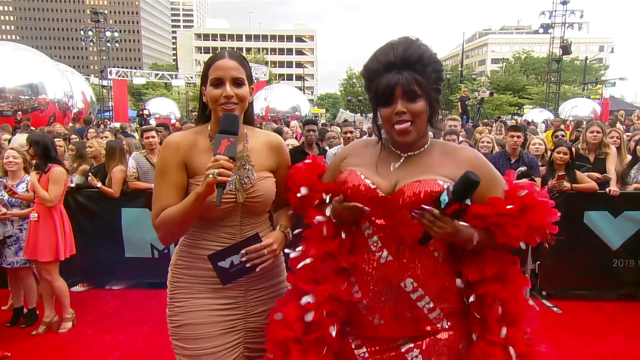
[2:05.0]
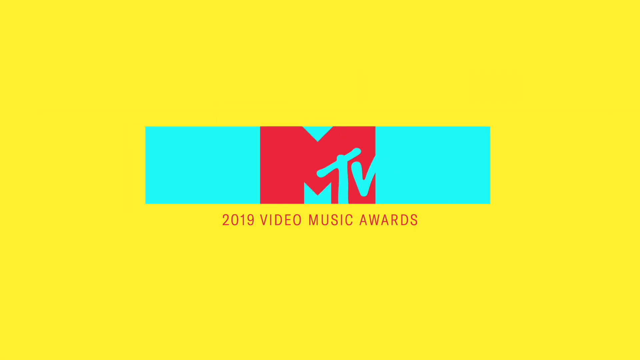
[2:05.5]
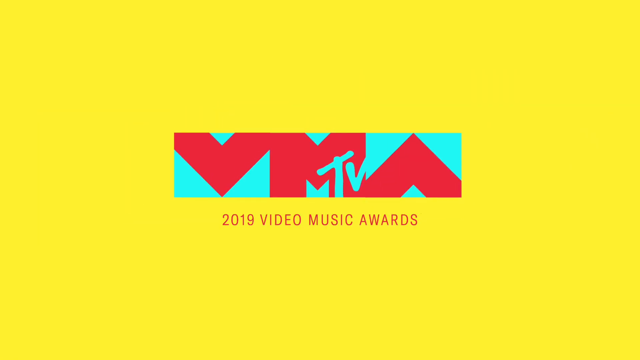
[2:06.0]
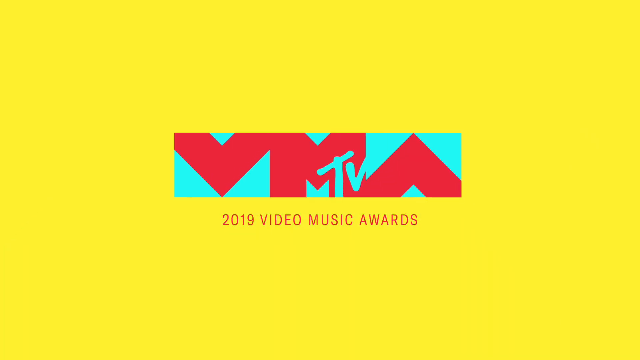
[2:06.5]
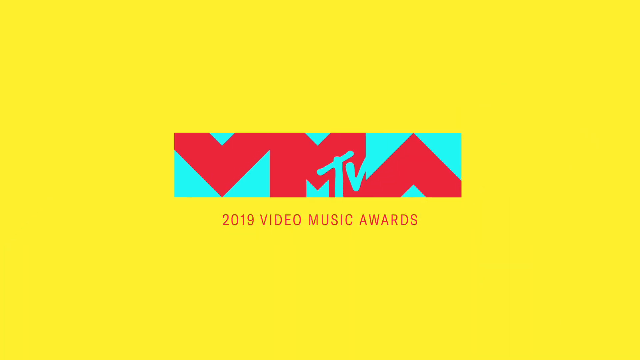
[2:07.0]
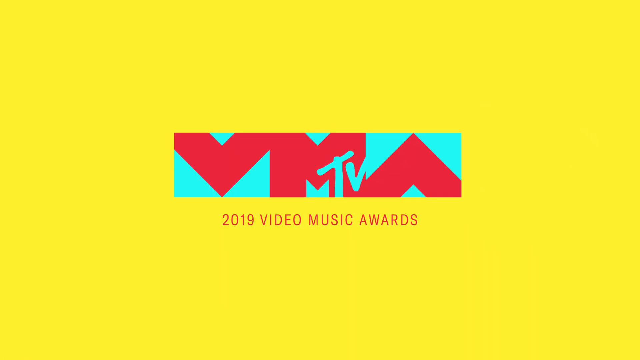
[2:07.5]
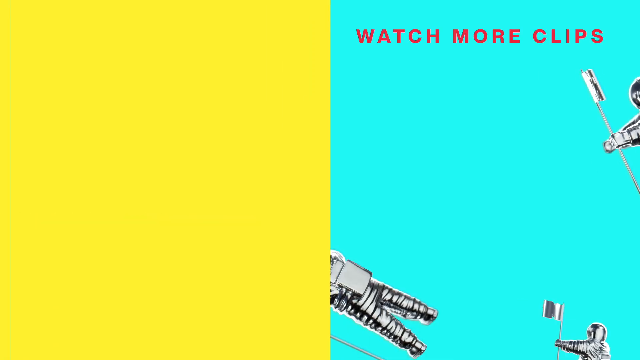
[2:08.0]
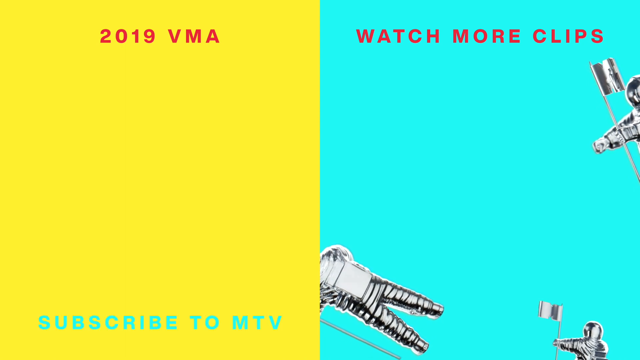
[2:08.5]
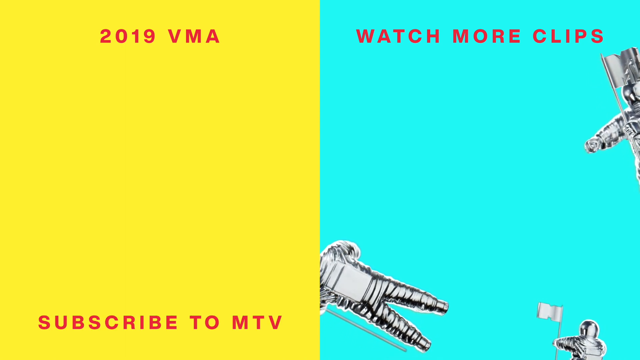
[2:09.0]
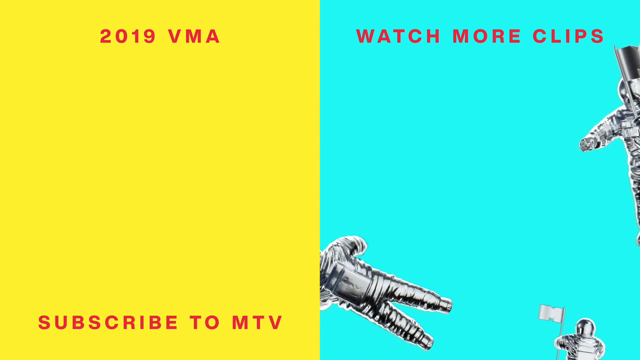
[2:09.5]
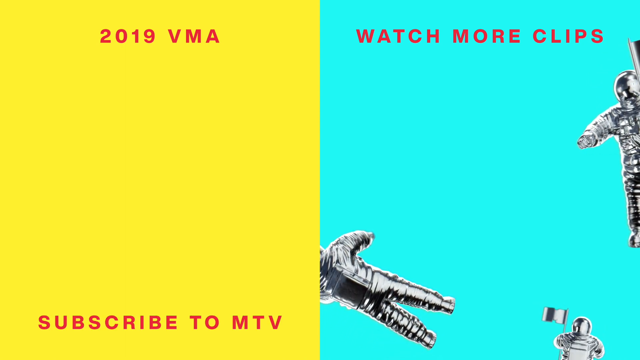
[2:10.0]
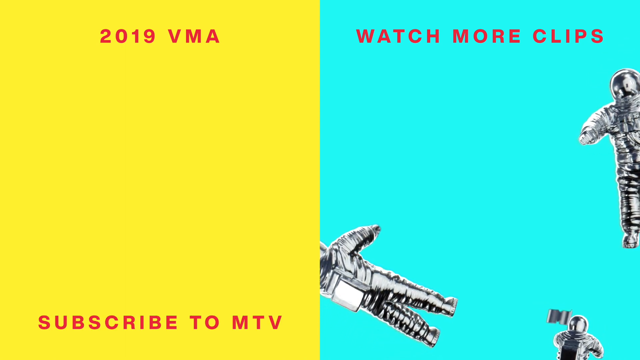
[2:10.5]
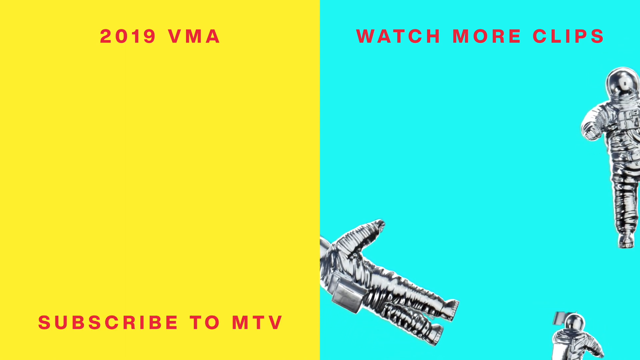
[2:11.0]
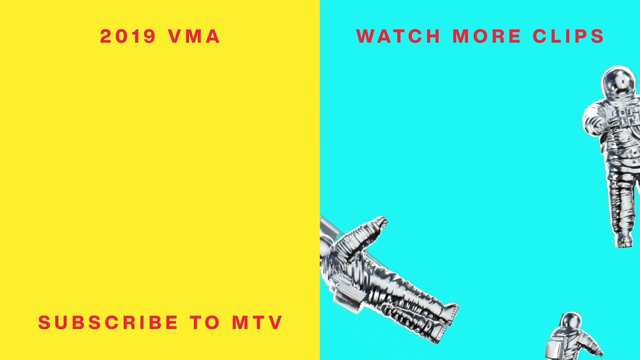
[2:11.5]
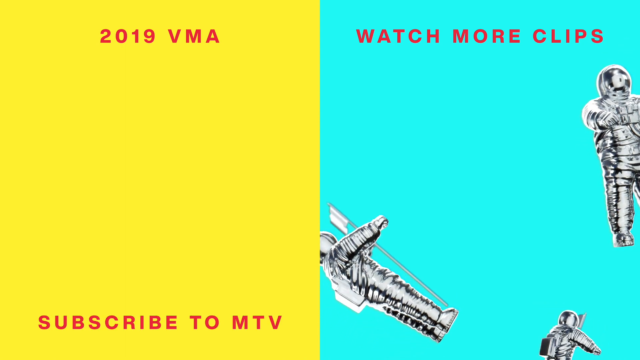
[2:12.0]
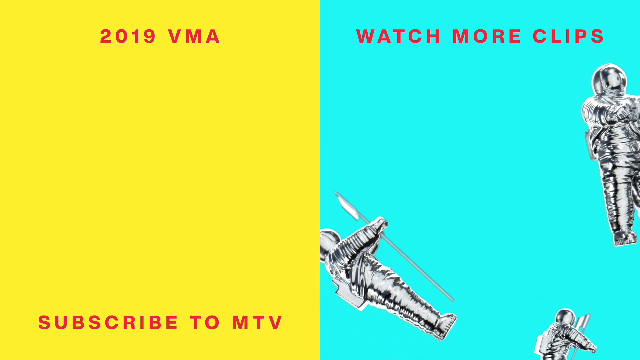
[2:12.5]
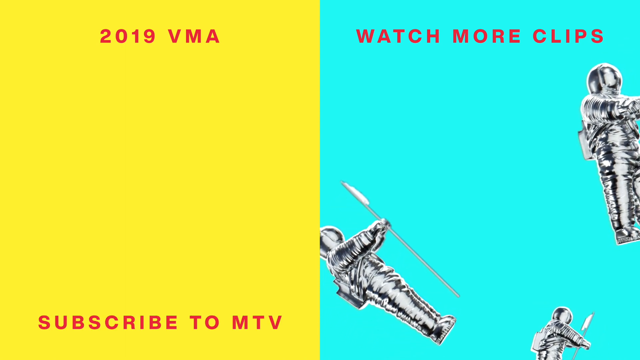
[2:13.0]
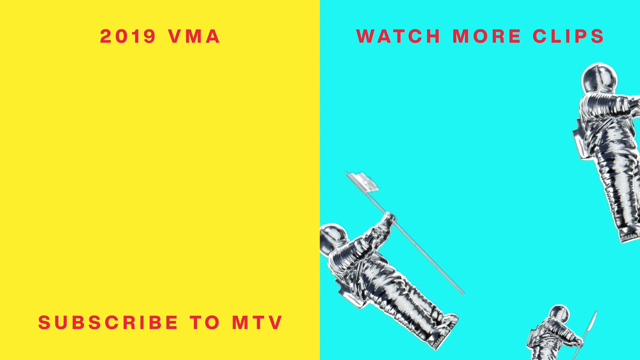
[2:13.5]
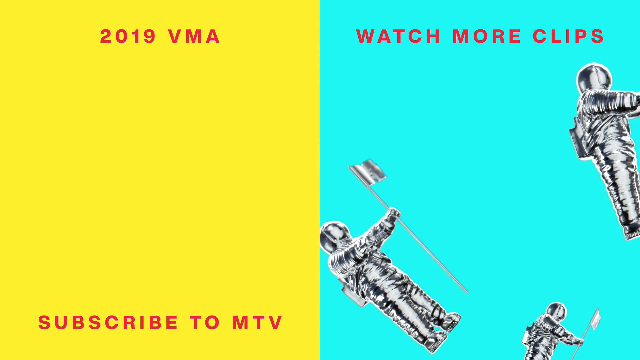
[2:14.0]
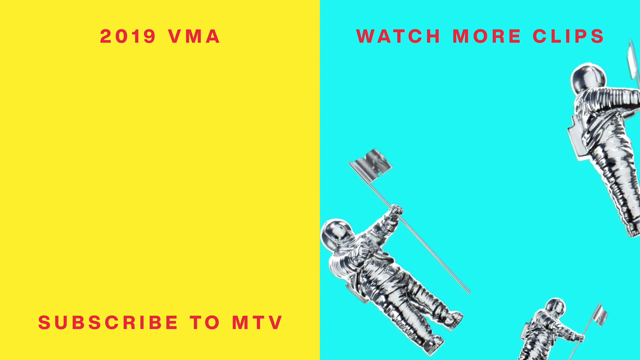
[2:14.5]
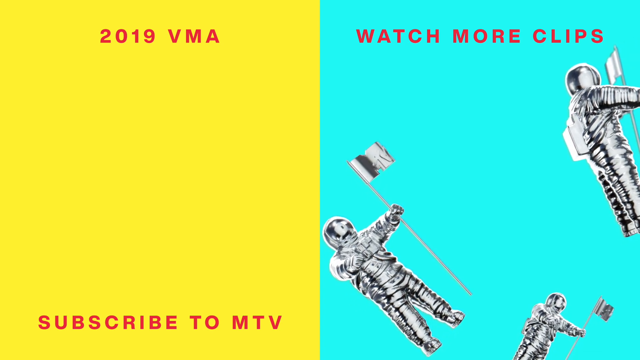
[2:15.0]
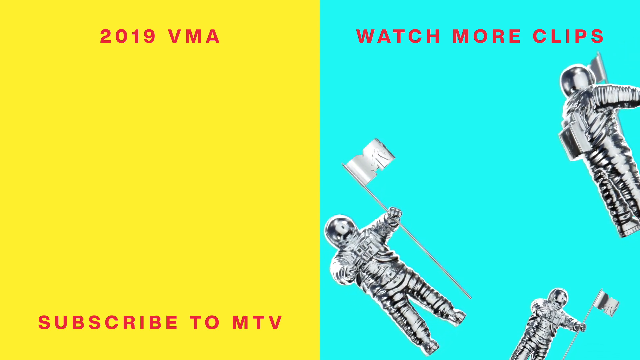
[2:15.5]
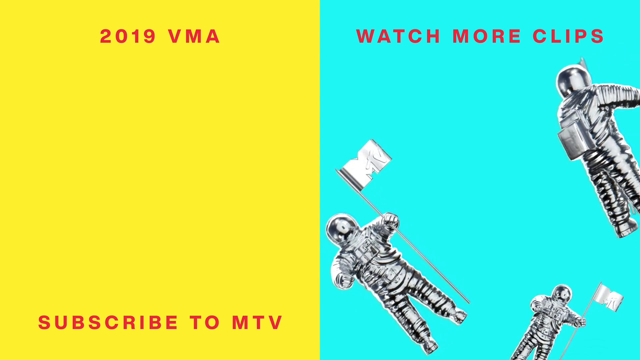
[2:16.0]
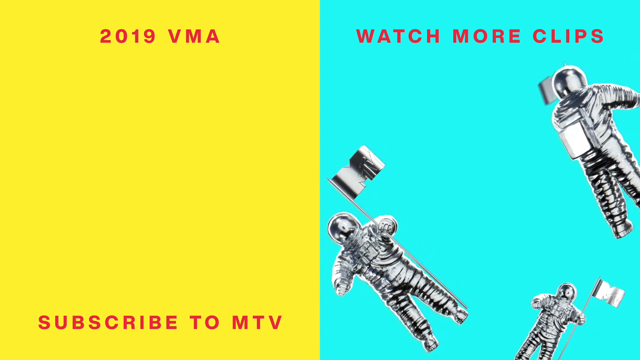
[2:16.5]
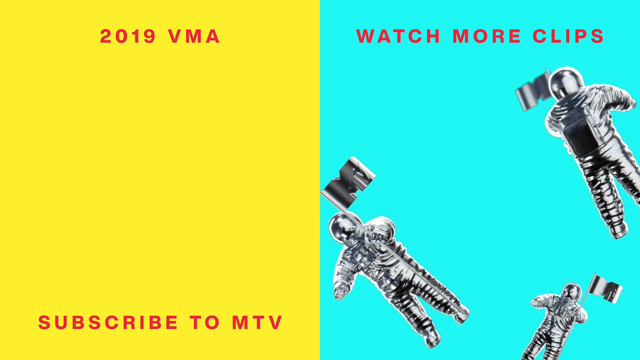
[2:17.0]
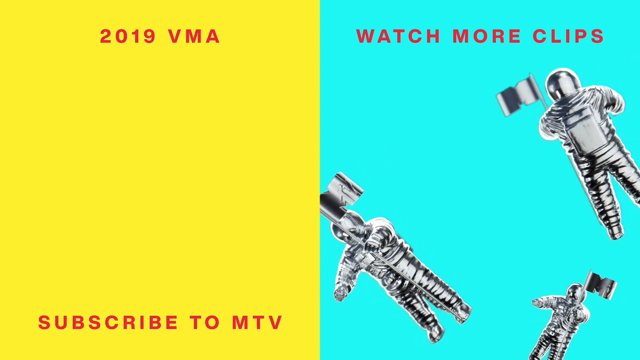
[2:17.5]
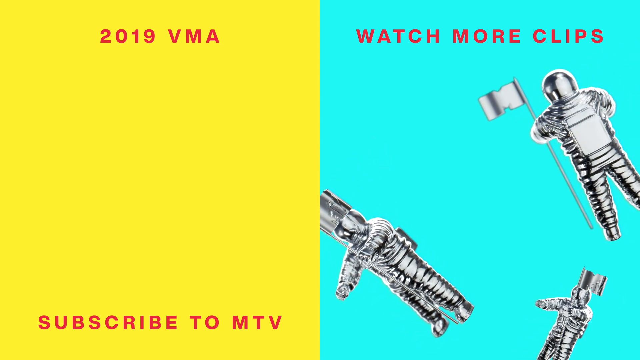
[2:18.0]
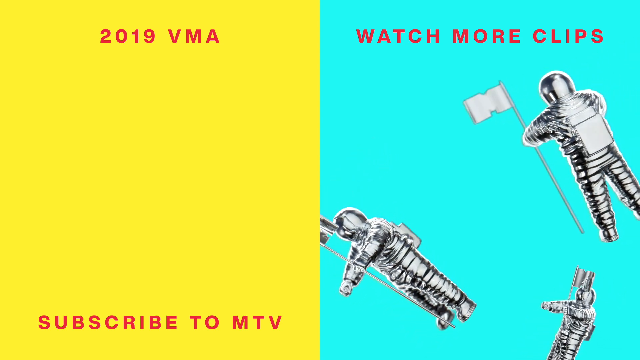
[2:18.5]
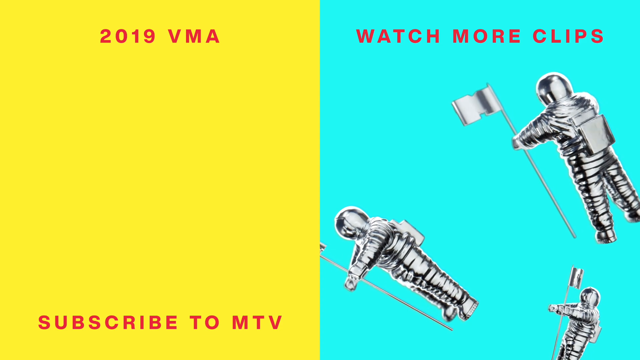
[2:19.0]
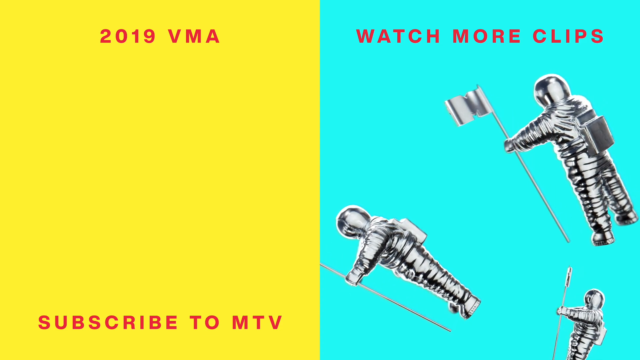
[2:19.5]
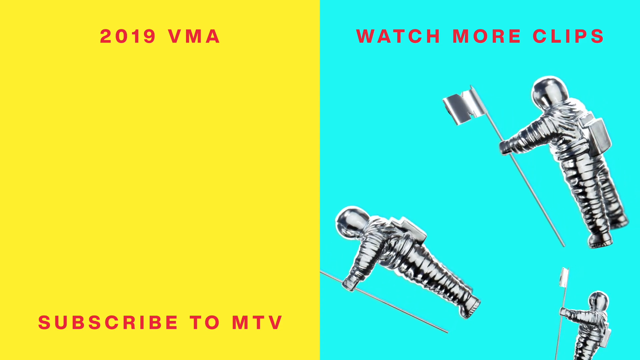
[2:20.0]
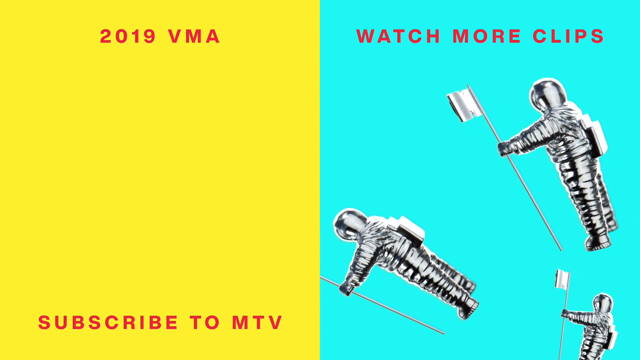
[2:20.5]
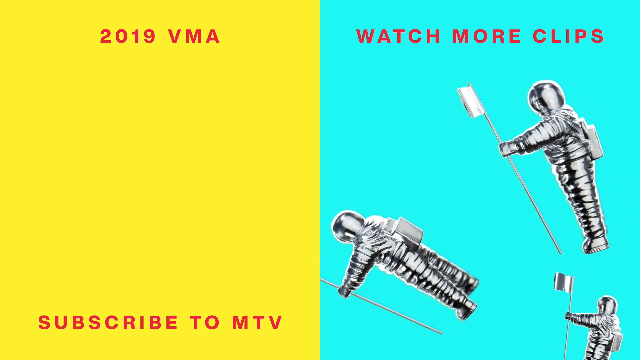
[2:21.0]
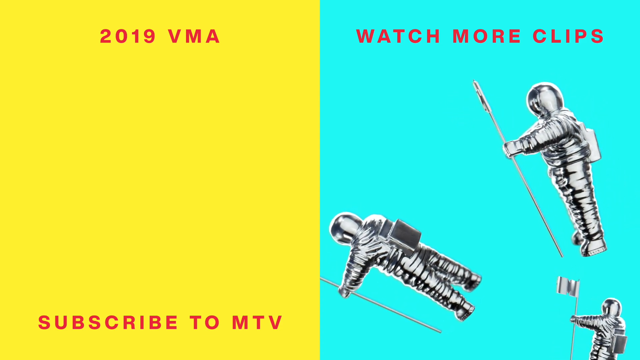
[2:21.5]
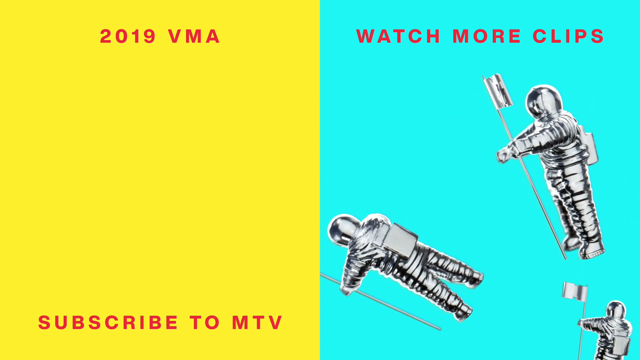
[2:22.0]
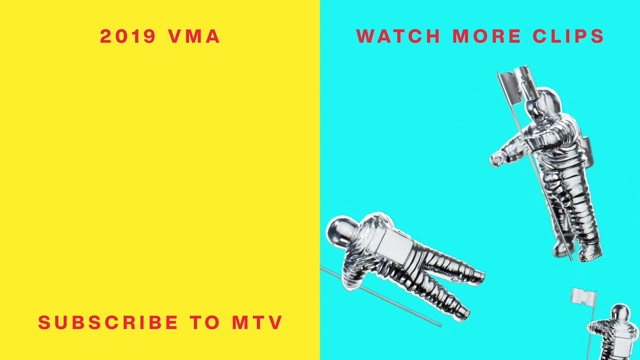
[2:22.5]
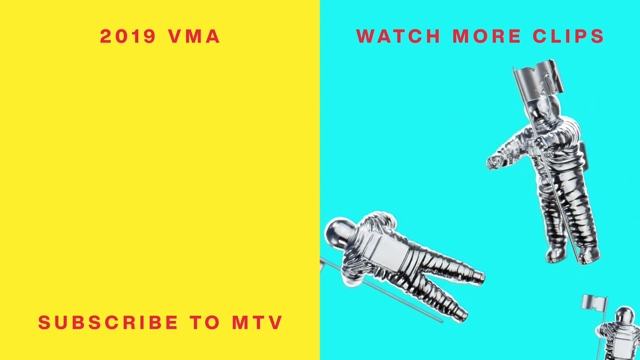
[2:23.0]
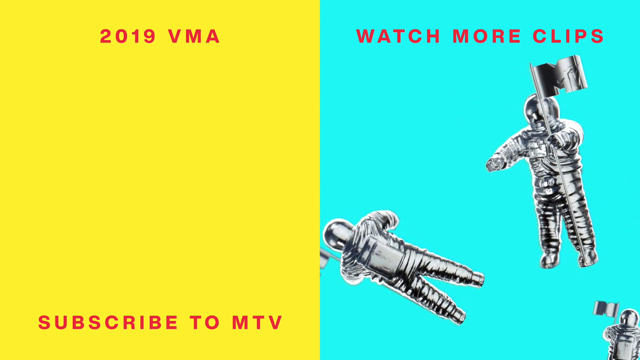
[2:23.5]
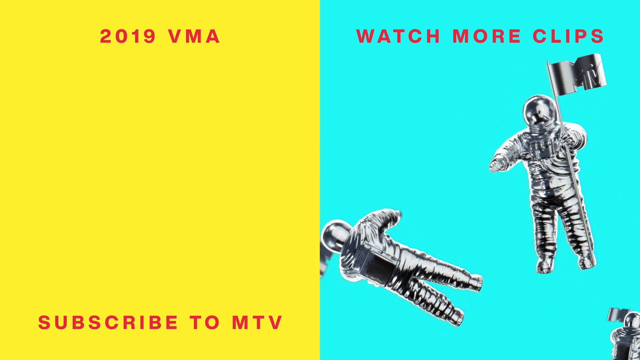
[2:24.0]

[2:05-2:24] The interview ends and a yellow screen appears with a blue and red MTV logo; below it the text says "the 2019 Video Music Awards," followed by "subscribe to MTV" and an option to watch more clips. Some astronauts are kind of floating around on the right-hand side of the screen. Everyone at the event was unmasked and standing close to each other.